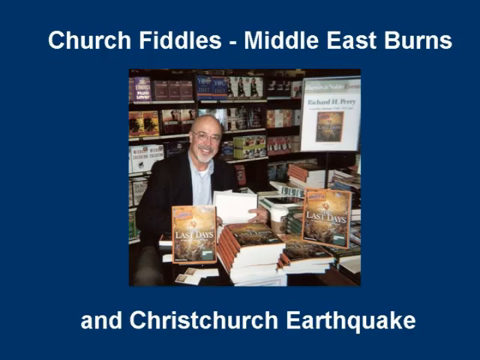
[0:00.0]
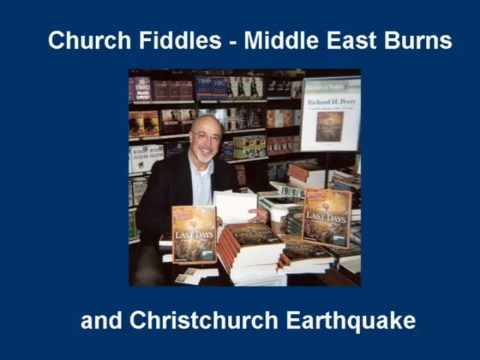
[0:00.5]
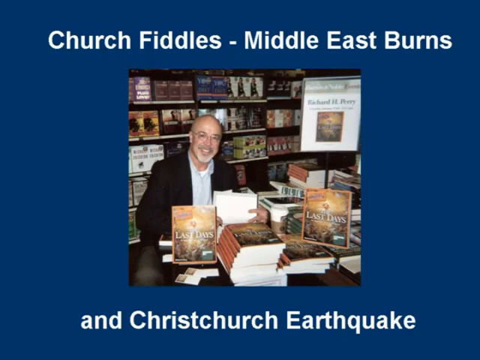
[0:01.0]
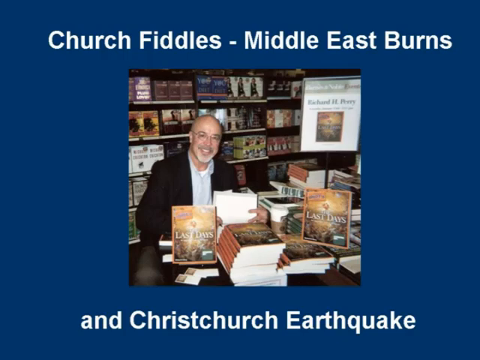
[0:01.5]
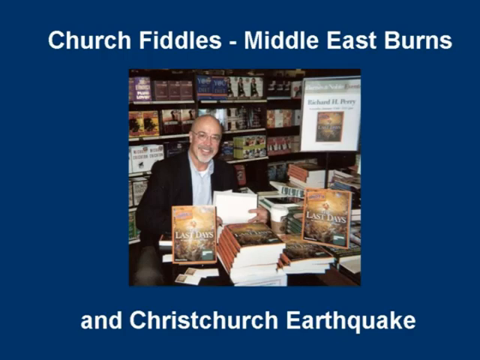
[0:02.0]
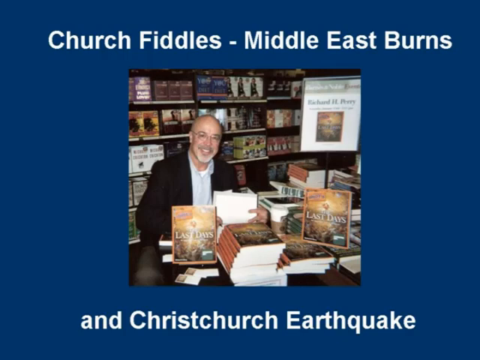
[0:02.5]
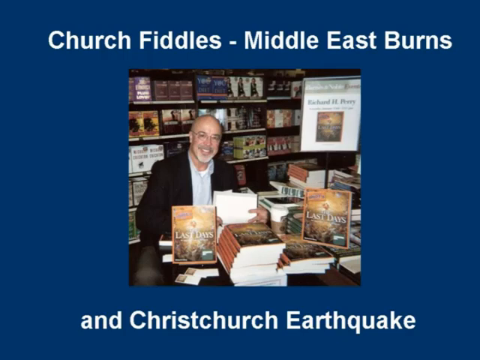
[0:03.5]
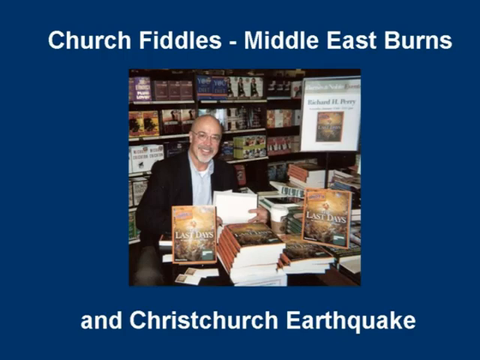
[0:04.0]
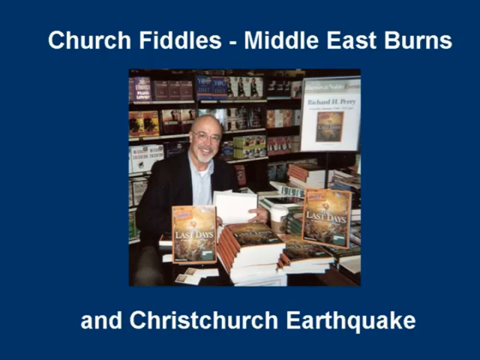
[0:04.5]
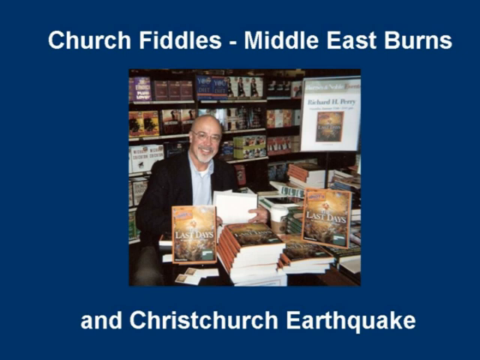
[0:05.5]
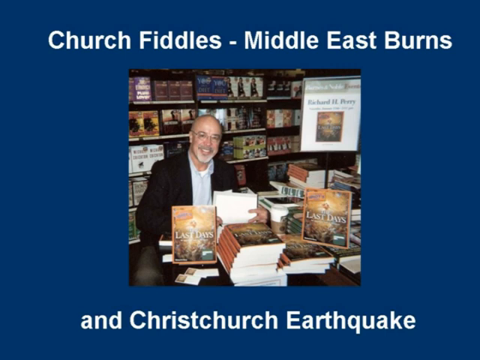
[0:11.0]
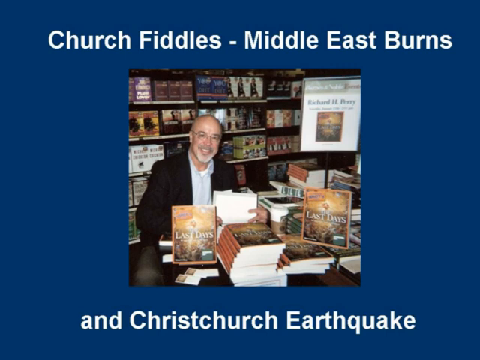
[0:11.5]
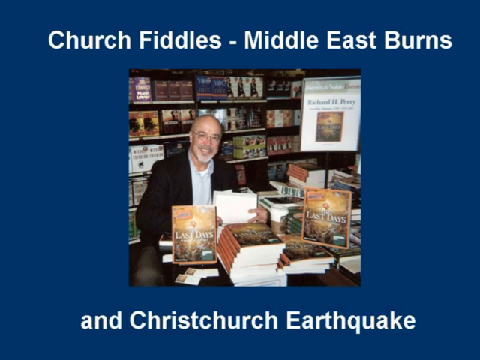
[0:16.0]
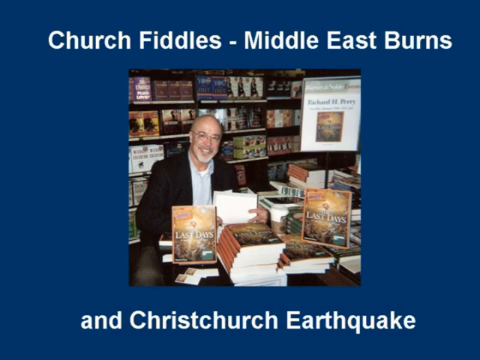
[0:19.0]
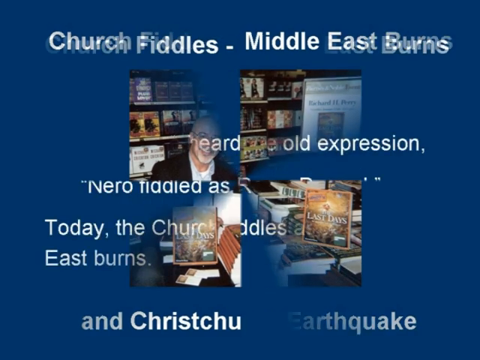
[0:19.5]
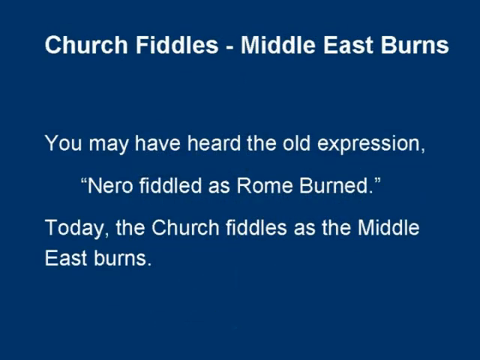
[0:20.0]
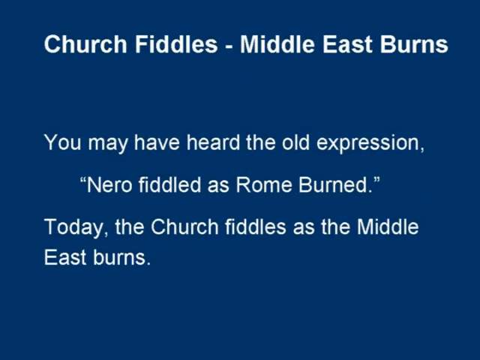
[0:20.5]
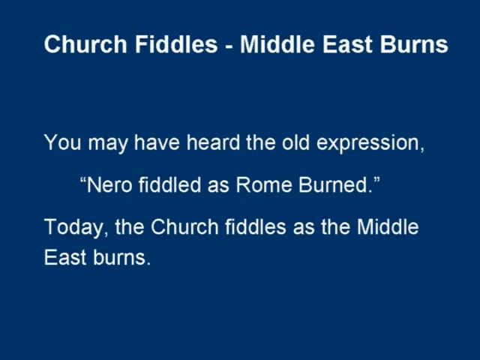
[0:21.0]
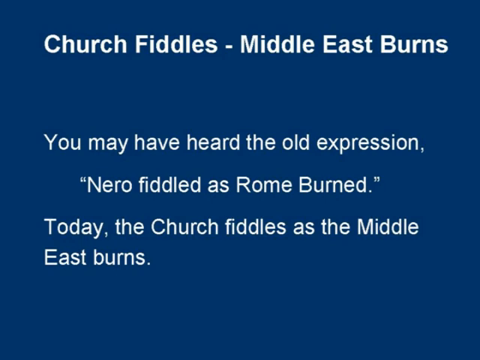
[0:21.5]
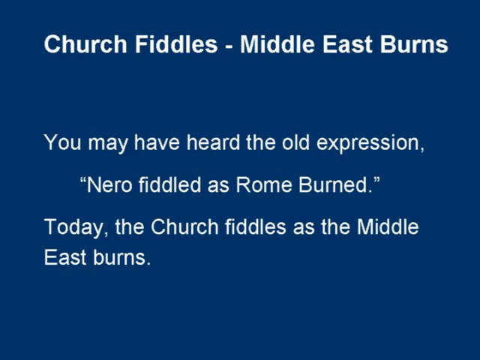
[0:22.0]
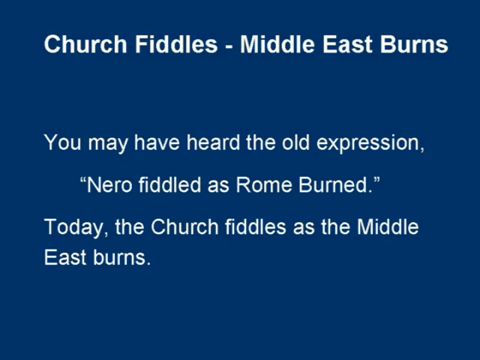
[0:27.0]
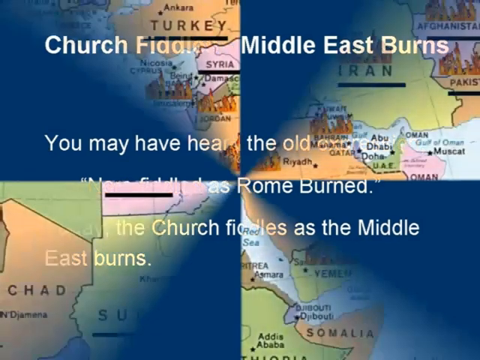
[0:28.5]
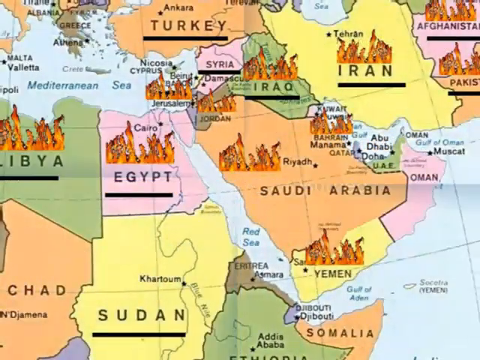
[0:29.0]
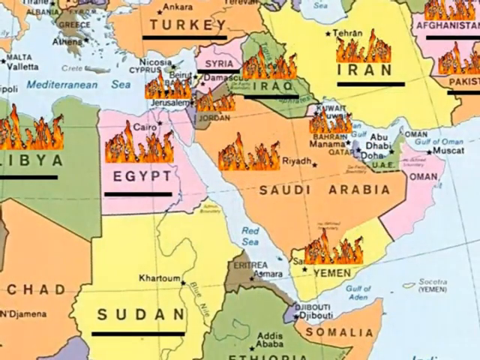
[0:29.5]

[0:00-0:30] The video opens with a photo of a man sitting at a table in a bookstore, with books on shelves behind him. On the table in front of him are stacks of a book called Last Days. The man is bald with a gray beard, and he wears glasses, a black jacket and a white shirt. Next to him is a sign with a picture of the book; it is slightly blurry, but the name on the sign looks like Richard H. Perry. Text around the photograph reads "Church Fiddles - Middle East Burns" at the top and "and Christchurch Earthquake" at the bottom. This screen dissolves into a blue screen with text that reads "Church Fiddles - Middle East Burns. You may have heard the old expression, Nero fiddled as Rome burned. Today the church fiddles as the Middle East burns." The screen then changes to a colorful illustrated map of the Middle East.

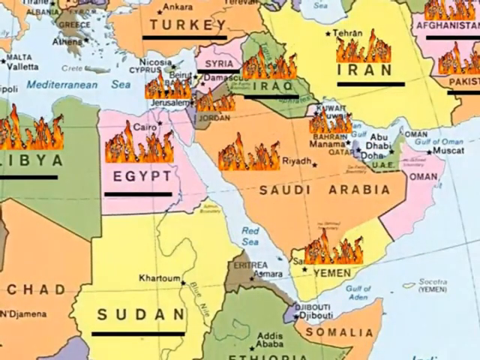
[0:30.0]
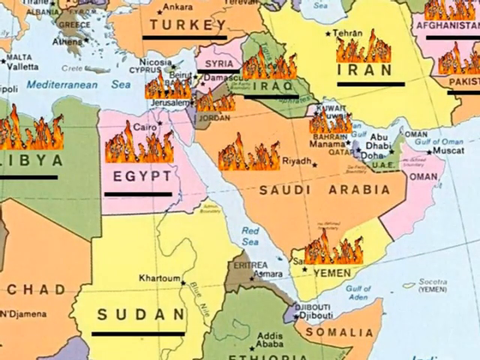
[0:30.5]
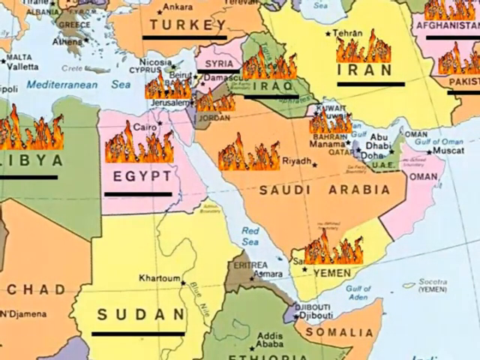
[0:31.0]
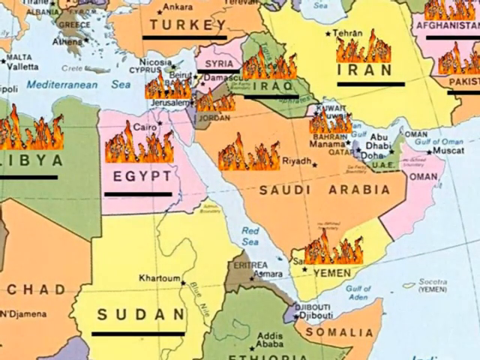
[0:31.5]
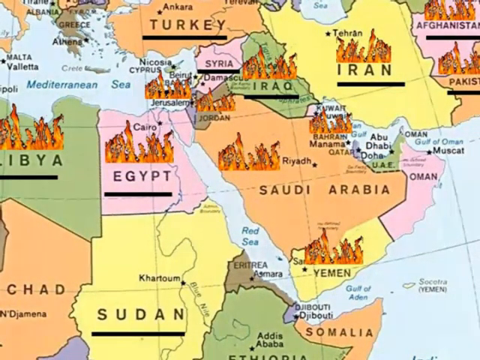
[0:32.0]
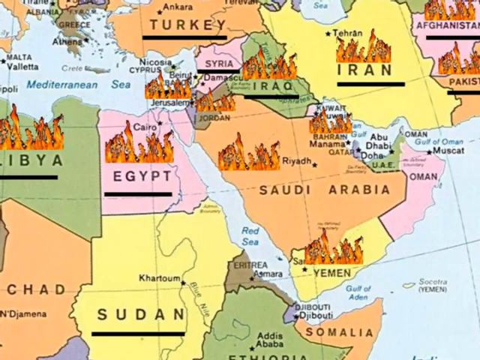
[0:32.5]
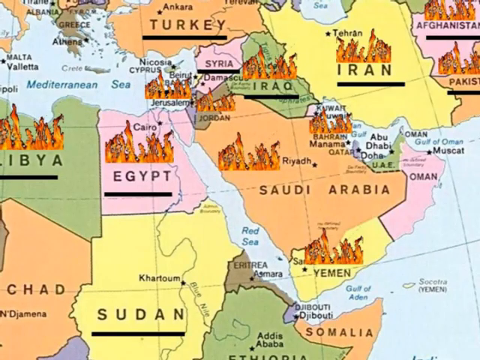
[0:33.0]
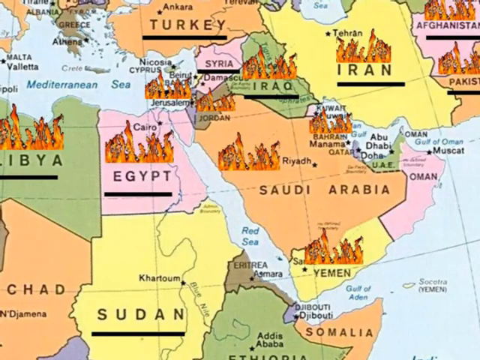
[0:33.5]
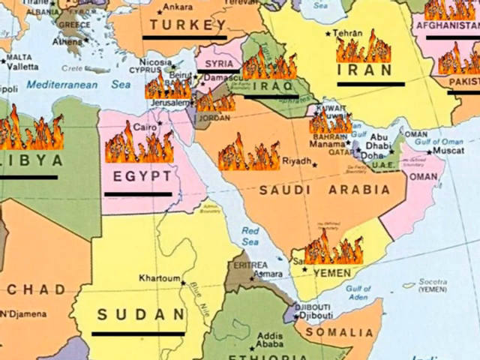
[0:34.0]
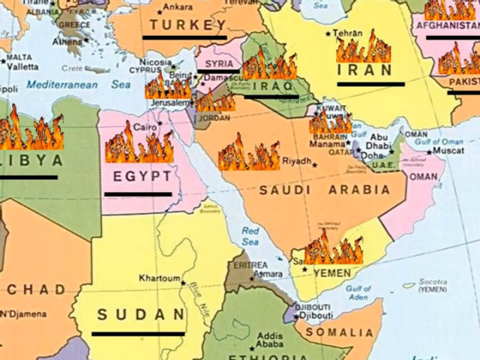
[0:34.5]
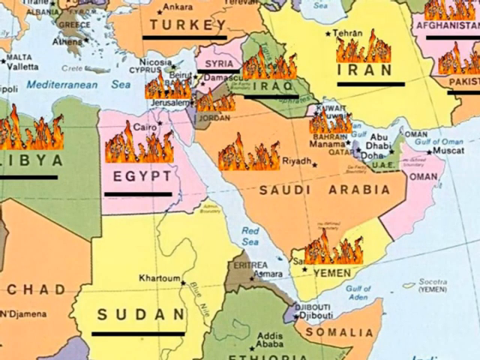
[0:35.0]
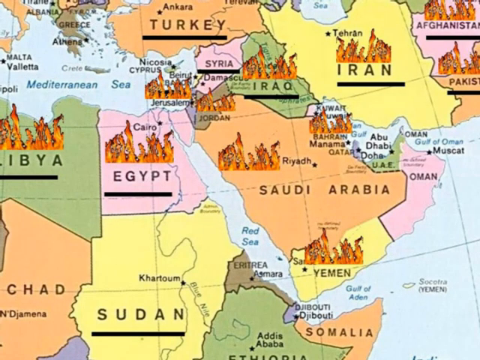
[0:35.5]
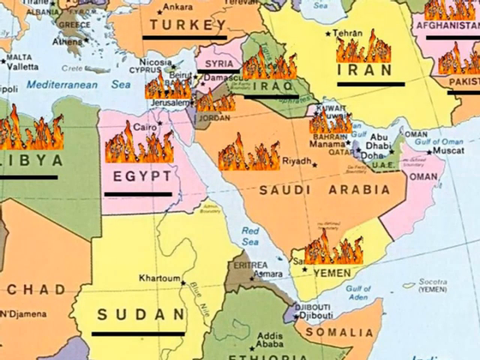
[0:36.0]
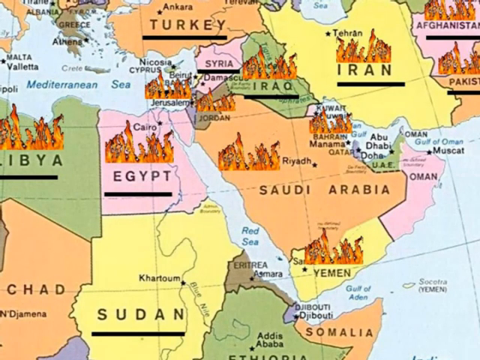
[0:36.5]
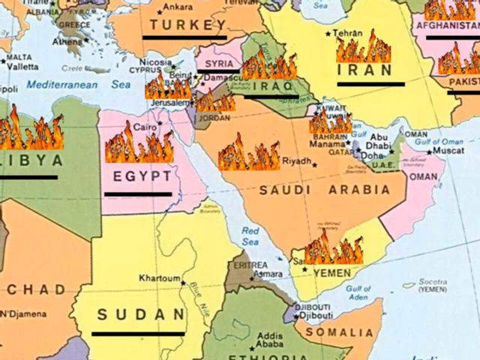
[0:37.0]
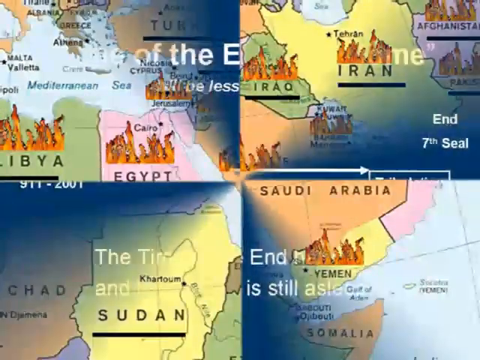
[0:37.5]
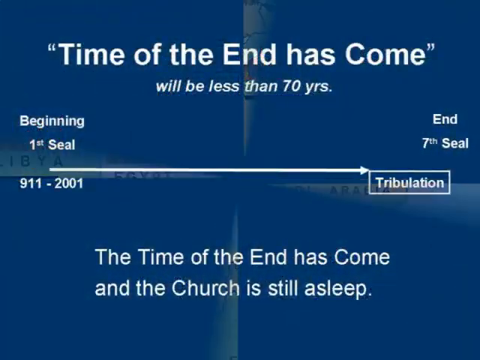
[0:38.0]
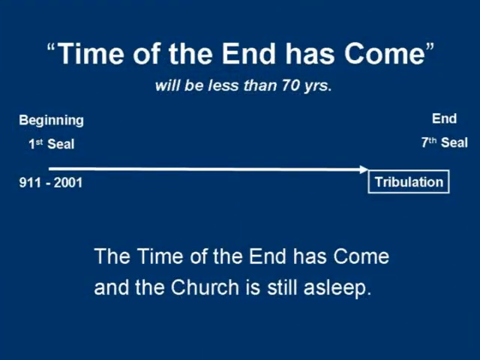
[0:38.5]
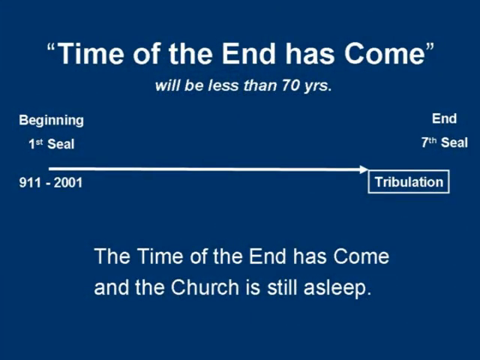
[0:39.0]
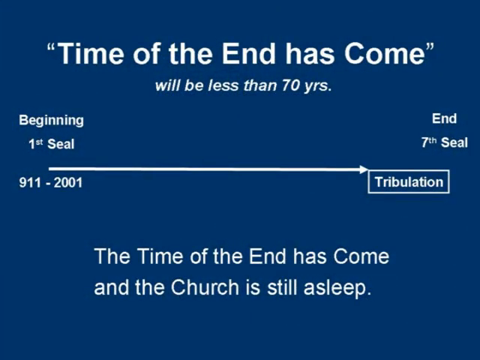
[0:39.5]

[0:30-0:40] A colorful illustrated map of the Middle East is shown. All of the country names are underlined with a black line, and each country contains illustrations of what look like groups of people. The map fades to a screen with a blue background. The text reads "Time of the End has Come, will be less than 70 yrs." Below this is a line with an arrow pointing to a box that says "Tribulation." At the beginning of the line is text reading "Beginning 1st Seal" and "911-2001," and at the end of the line is text reading "End 7th Seal." Text at the bottom of the screen reads "The Time of the End has Come and the Church is still asleep."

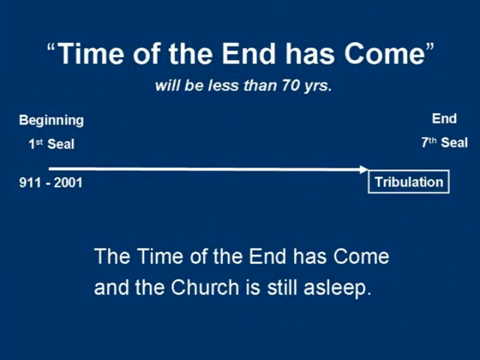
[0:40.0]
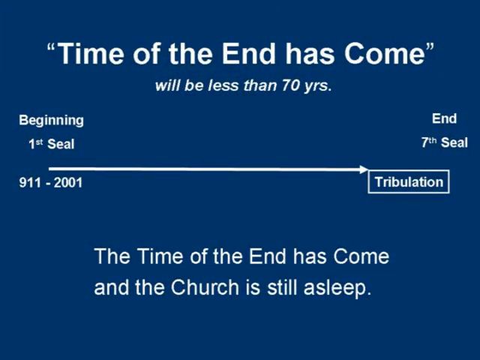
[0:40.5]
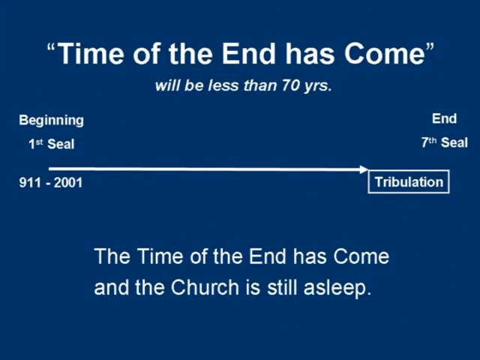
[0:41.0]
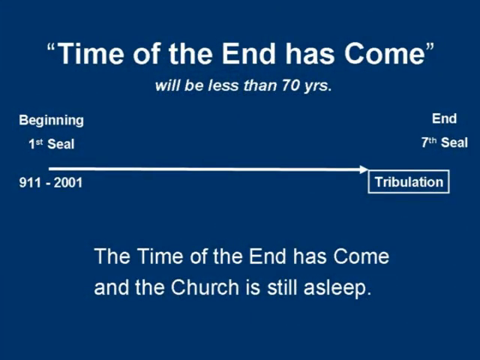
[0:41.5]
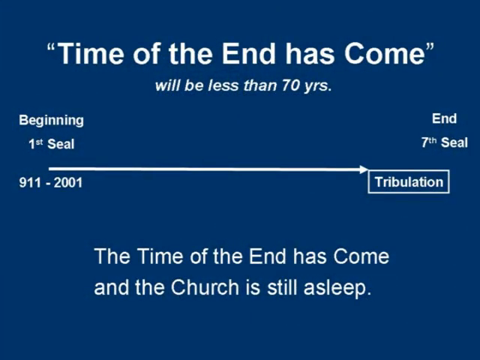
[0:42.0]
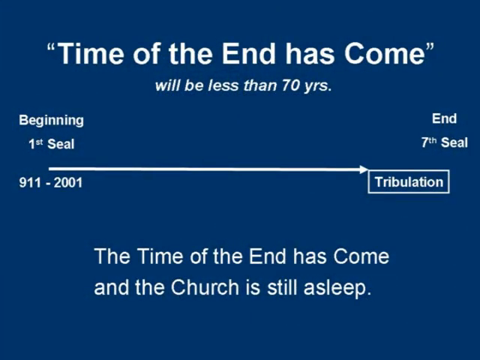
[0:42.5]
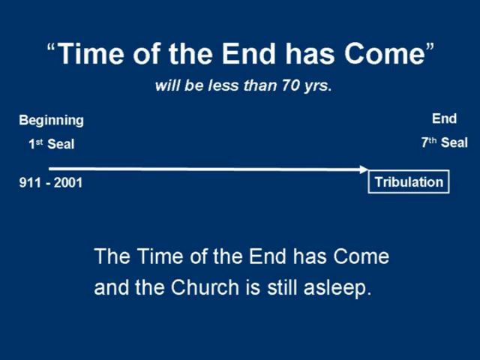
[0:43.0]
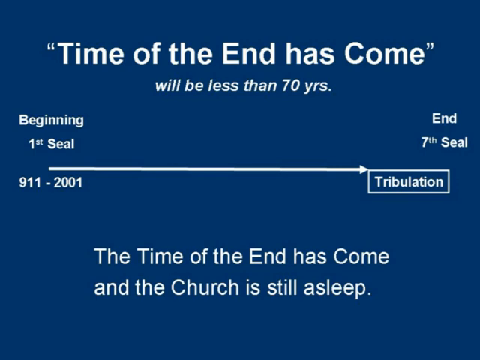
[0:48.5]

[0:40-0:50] A single screen with a blue background shows text reading "Time of the end has come" at the top and "will be less than 70 yrs" below that. A long white arrow across the middle of the screen points to a box containing the word "Tribulation." At the front of the line is text reading "Beginning 1st Seal," and at the end it says "End 7th seal." The numbers "9-11 to 2001" are also on the left side. At the bottom of the screen the text reads "The time of the end has come and the church is still asleep."